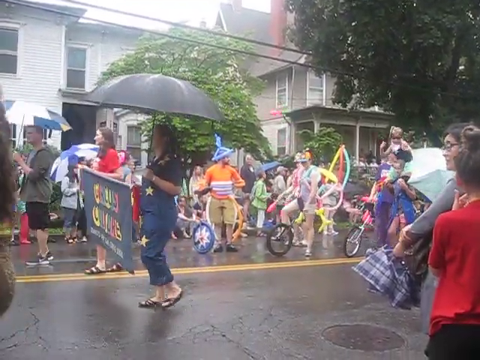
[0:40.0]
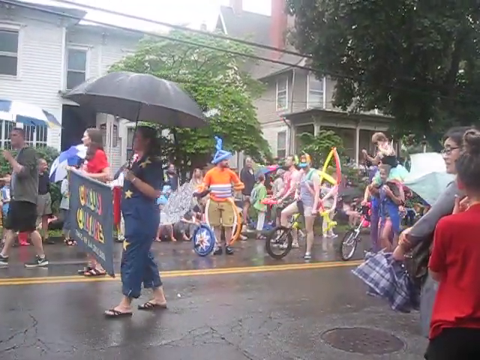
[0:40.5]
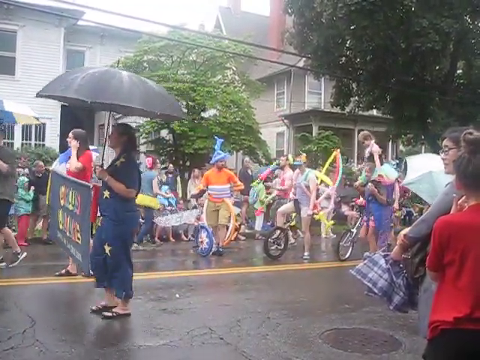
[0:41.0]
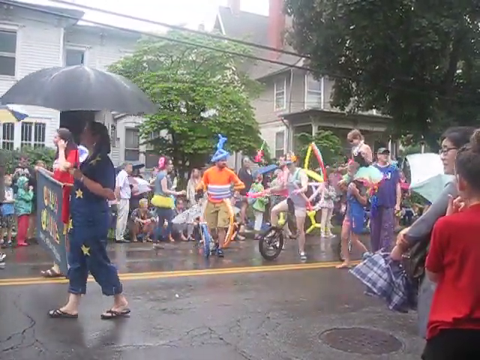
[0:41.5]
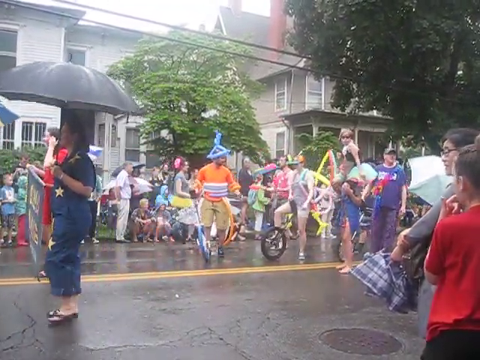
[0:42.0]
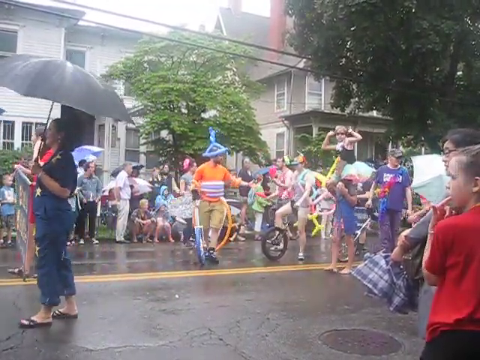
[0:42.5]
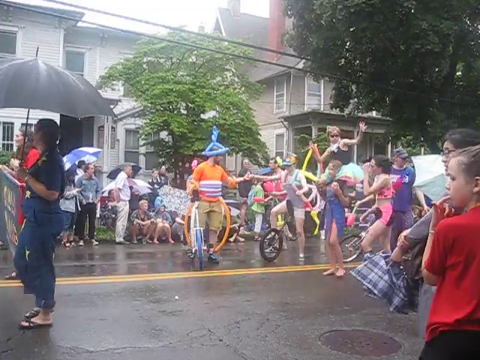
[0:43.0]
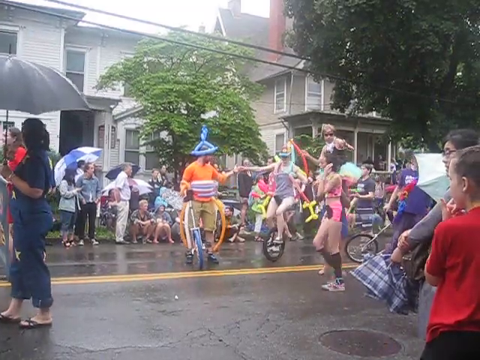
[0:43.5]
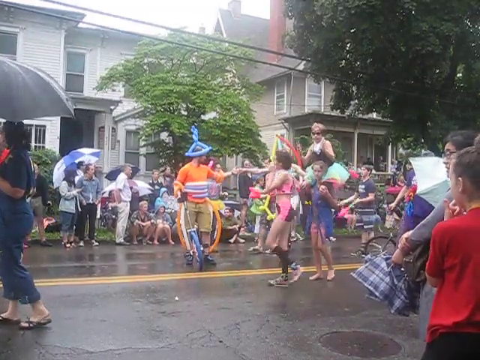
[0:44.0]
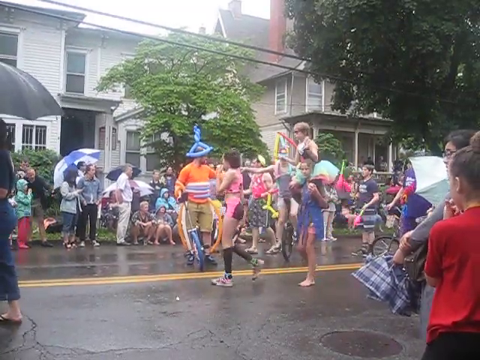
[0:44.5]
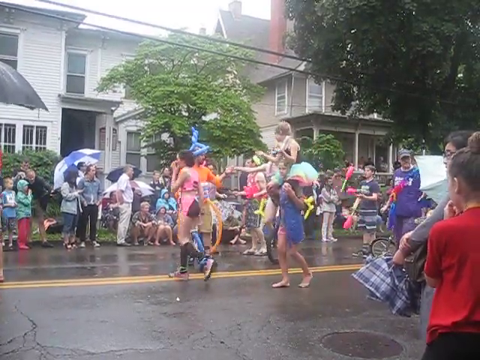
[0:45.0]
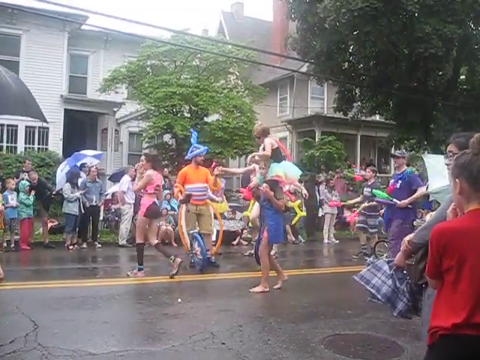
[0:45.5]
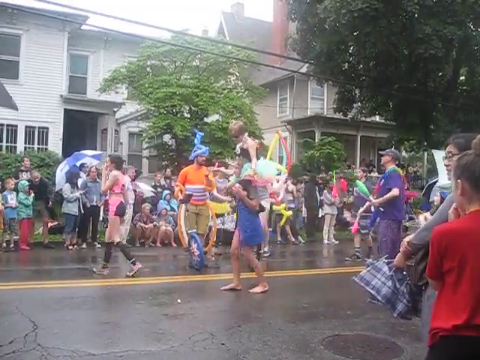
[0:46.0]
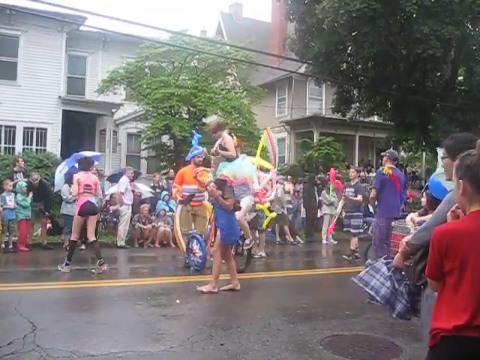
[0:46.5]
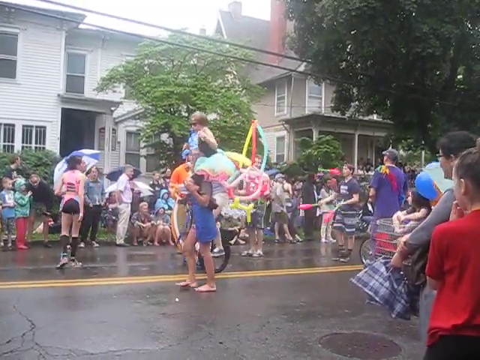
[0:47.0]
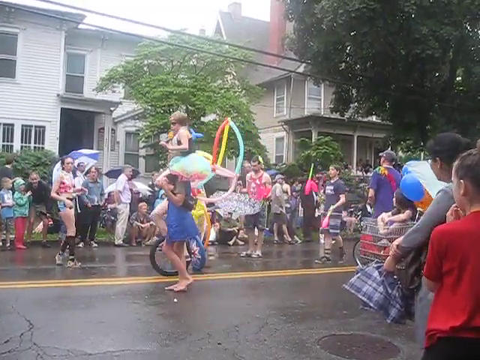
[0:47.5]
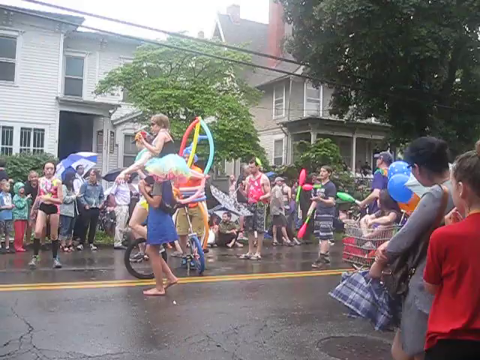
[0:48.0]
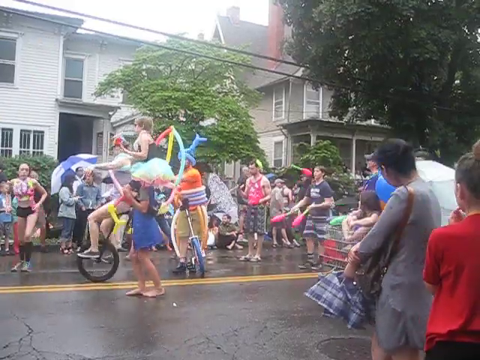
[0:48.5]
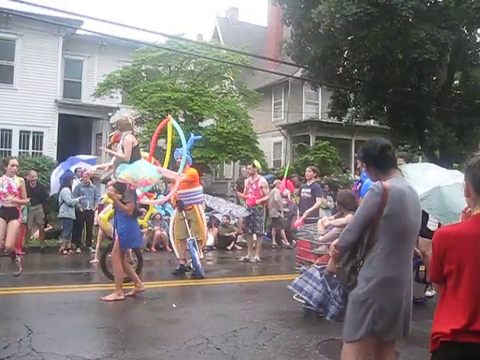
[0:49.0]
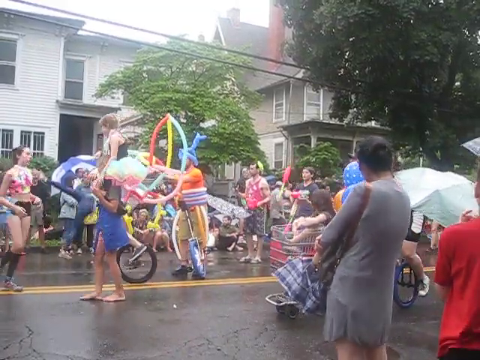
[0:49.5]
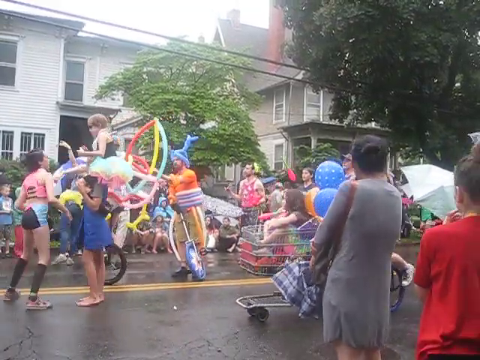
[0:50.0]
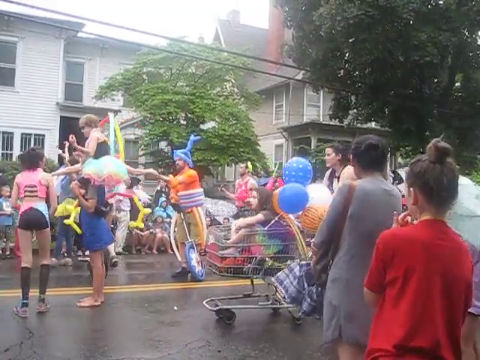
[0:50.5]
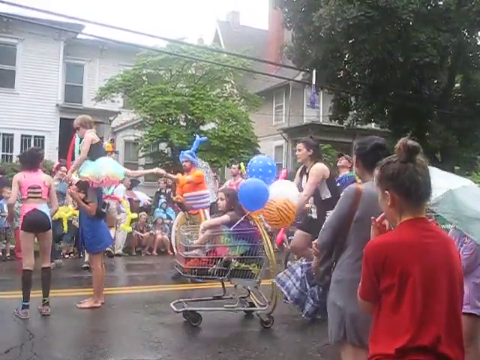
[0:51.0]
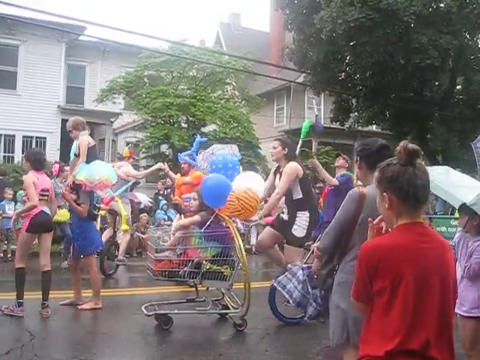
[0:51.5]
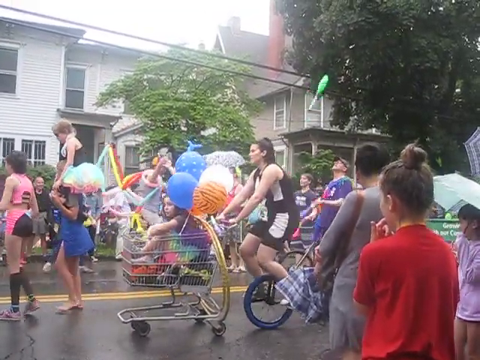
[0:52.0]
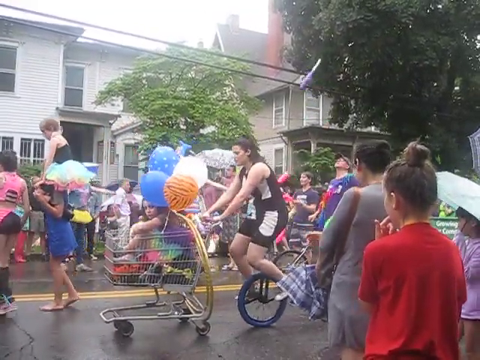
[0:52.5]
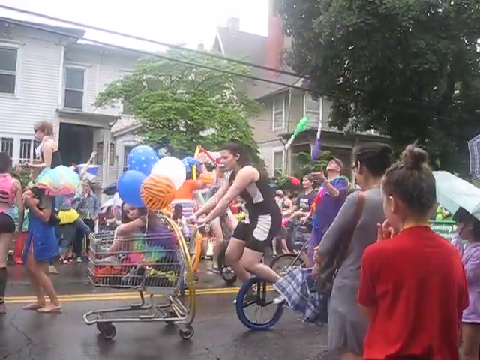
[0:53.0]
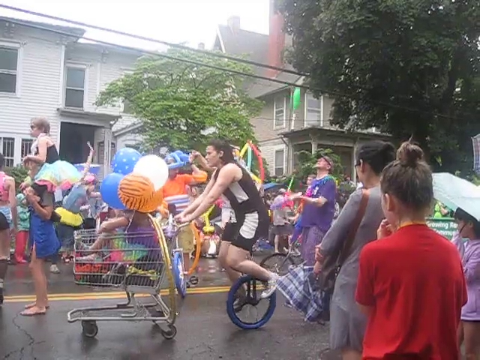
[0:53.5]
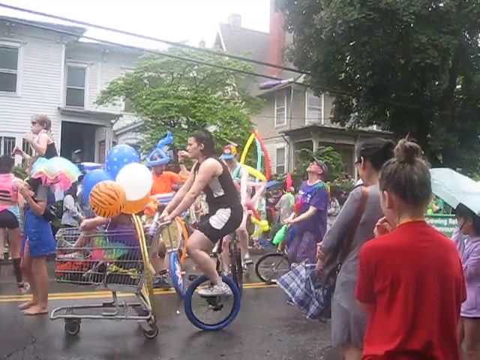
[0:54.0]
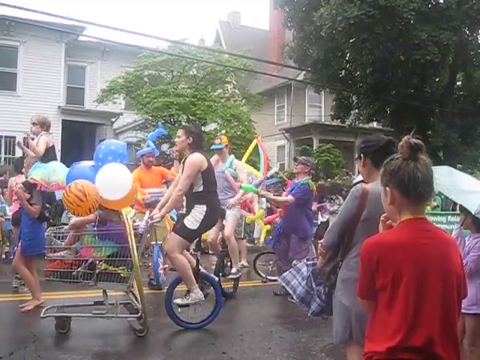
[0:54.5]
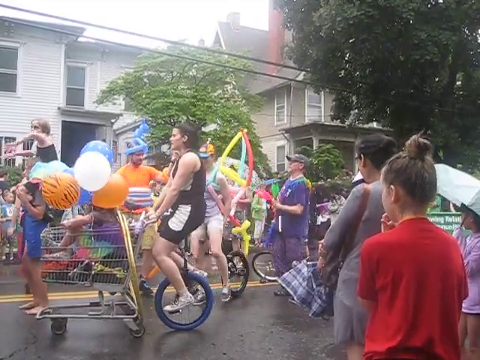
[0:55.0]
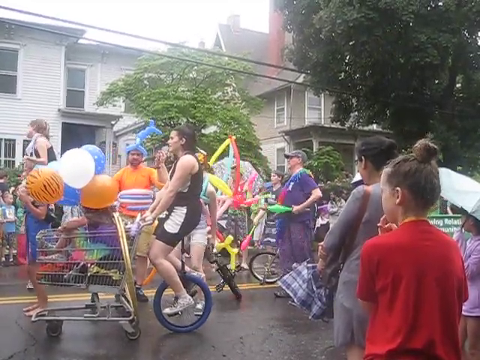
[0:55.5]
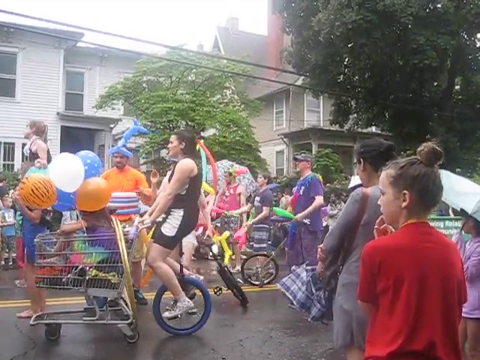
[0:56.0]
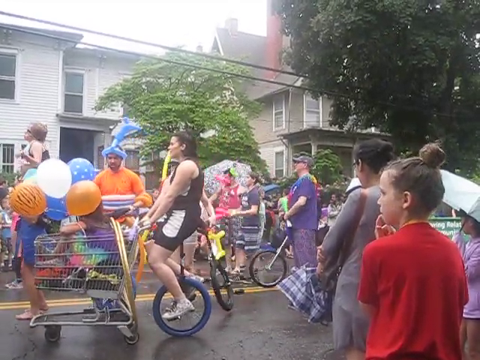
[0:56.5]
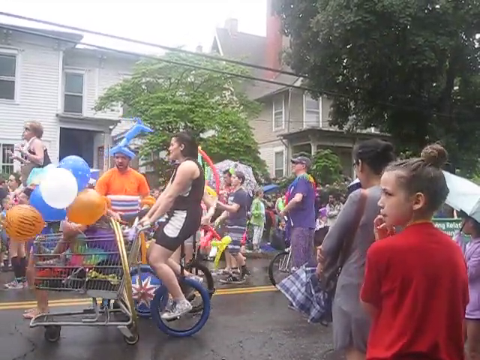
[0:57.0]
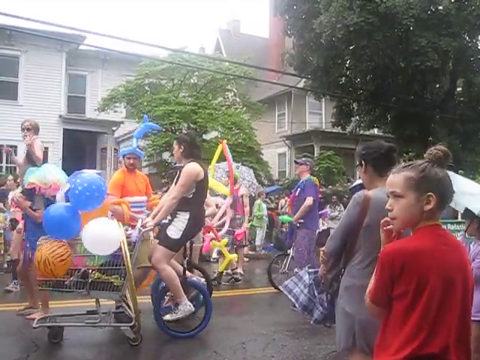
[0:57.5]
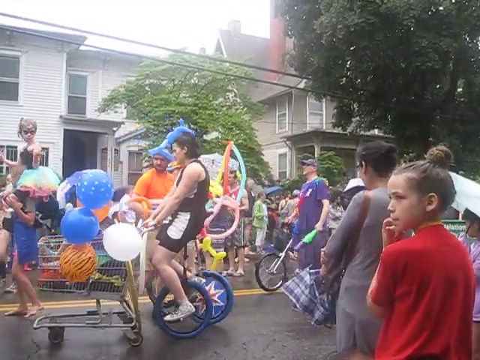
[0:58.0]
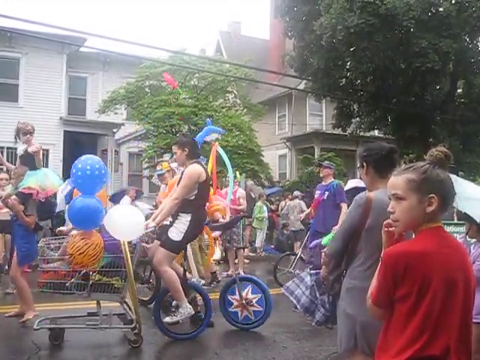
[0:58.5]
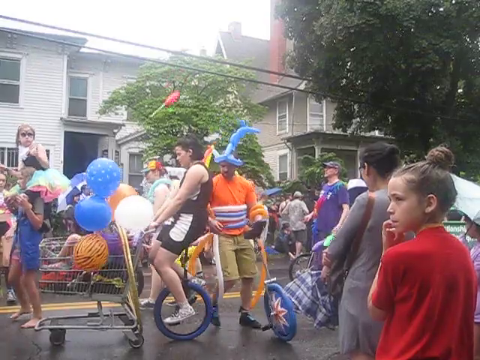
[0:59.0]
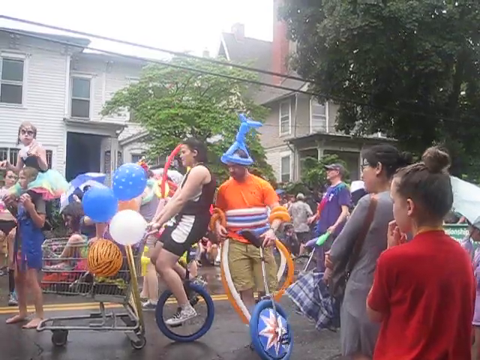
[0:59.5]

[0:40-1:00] The street scene is filmed from the side of the road, looking onto the road and the pavement on the other side, with houses and a couple of trees in the background. The road is clear of cars, and a procession of people walks down it, carrying banners about circus; it is the local circus school in procession. Some girls in leotards walk along. A man rides a unicycle with a kind of big backpack made out of magic balloons on his back. Another man has a unicycle but is not on it yet. A girl in a black and white outfit rides a unicycle while pushing a shopping trolley with a small child in it.